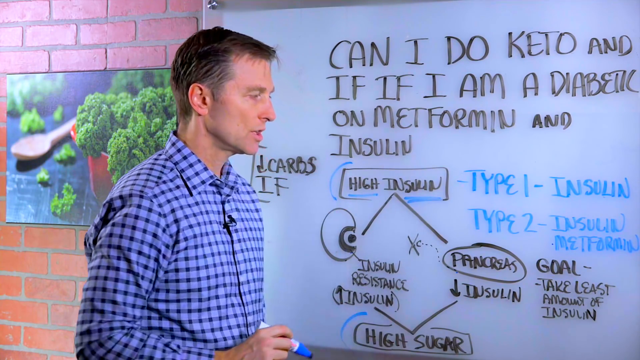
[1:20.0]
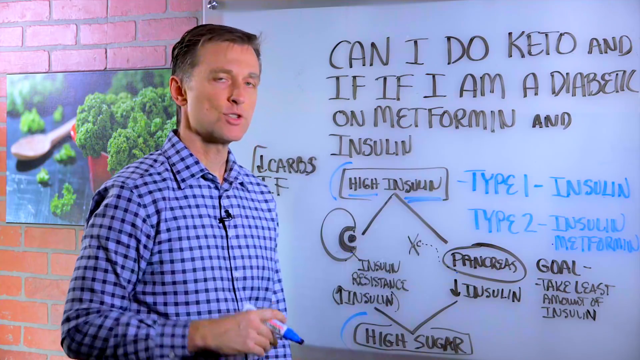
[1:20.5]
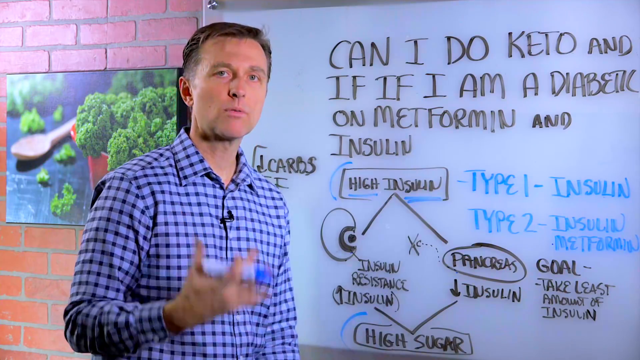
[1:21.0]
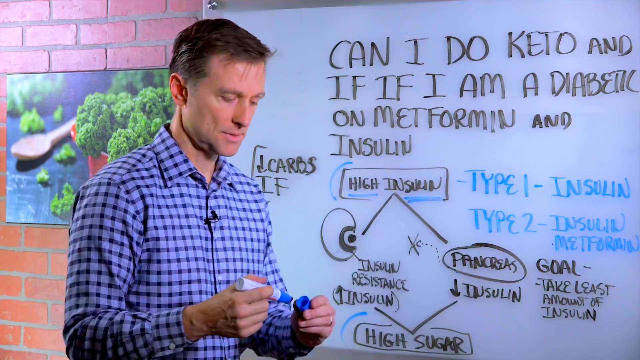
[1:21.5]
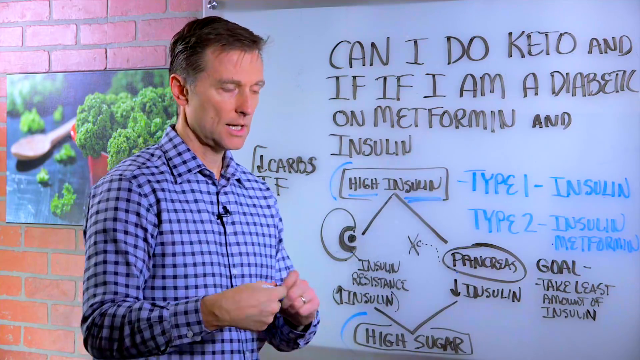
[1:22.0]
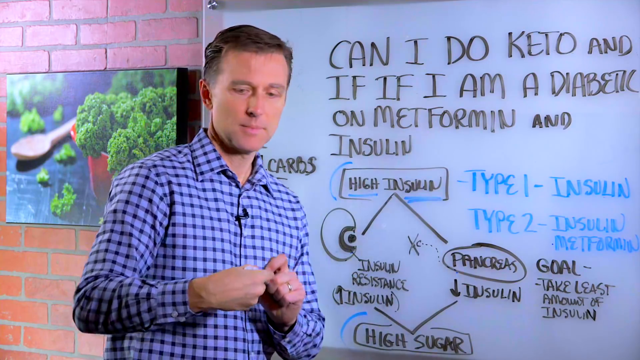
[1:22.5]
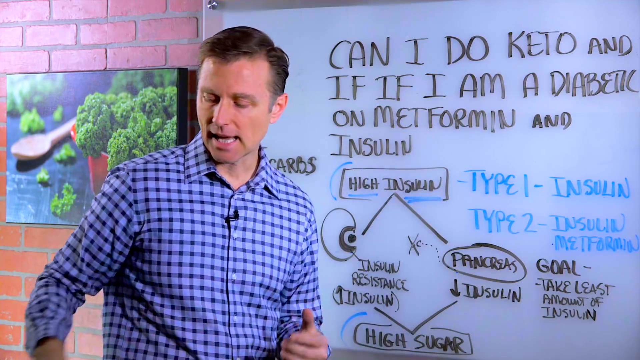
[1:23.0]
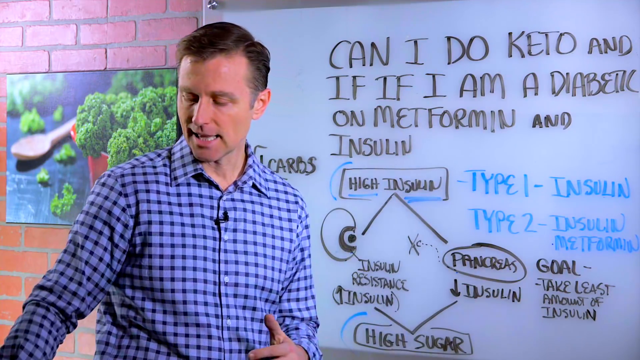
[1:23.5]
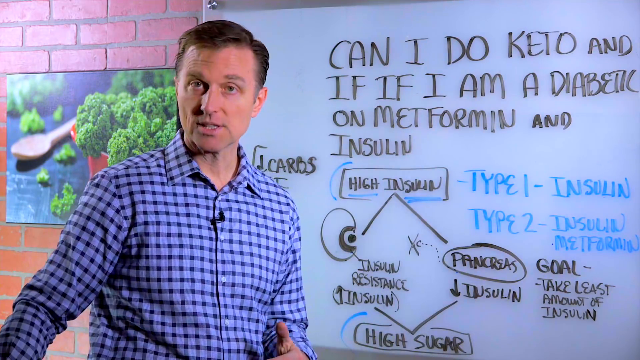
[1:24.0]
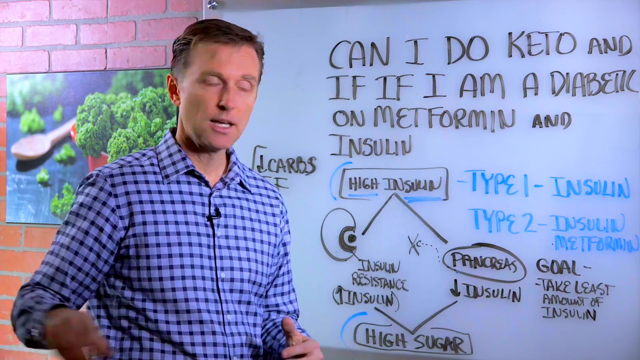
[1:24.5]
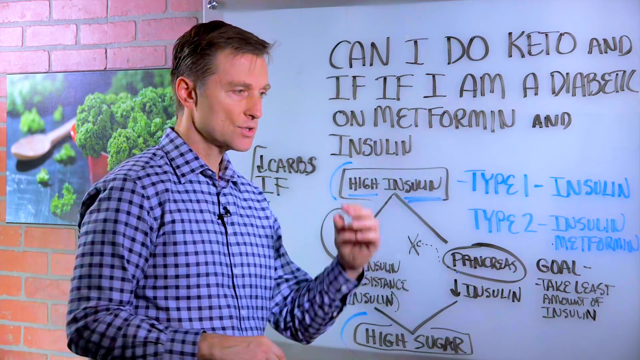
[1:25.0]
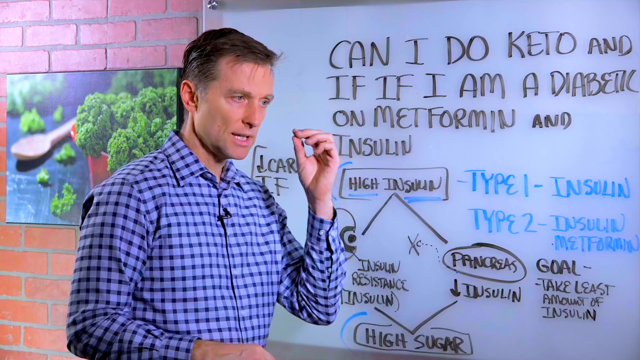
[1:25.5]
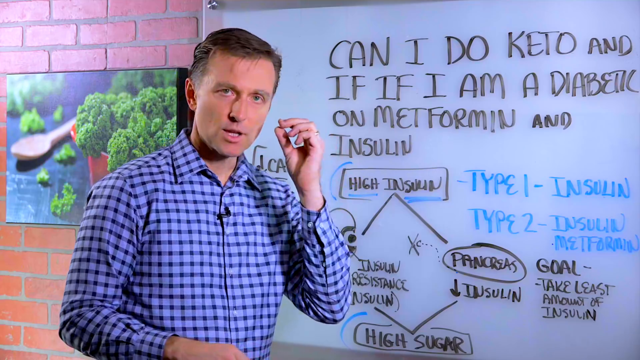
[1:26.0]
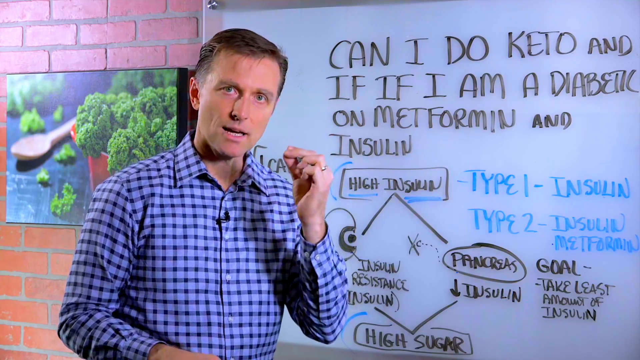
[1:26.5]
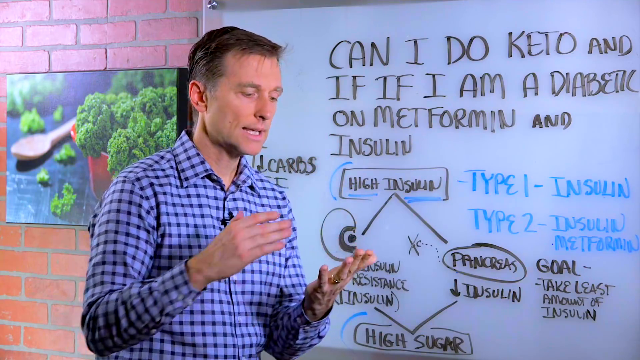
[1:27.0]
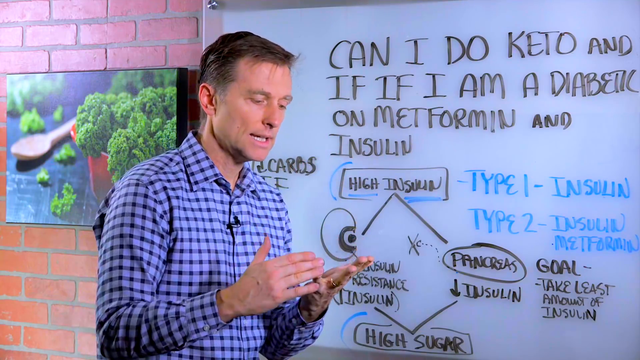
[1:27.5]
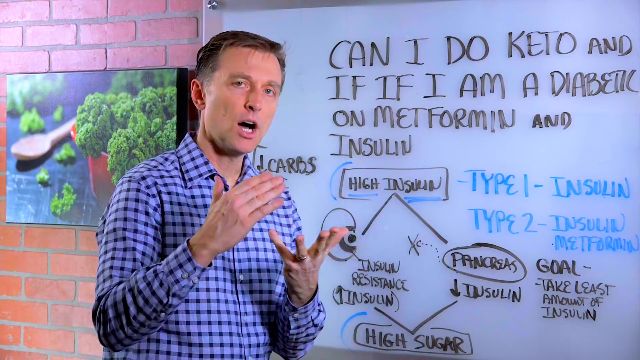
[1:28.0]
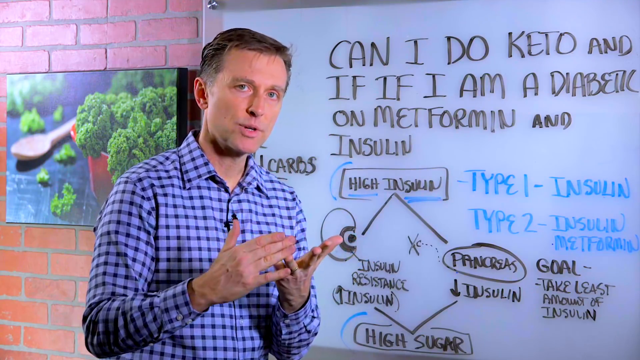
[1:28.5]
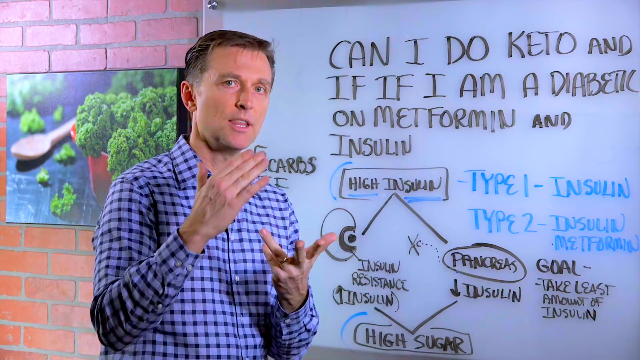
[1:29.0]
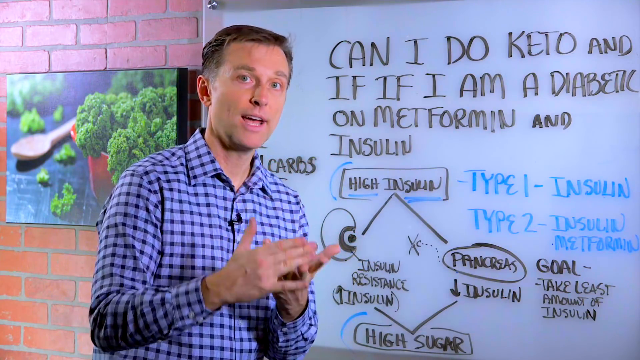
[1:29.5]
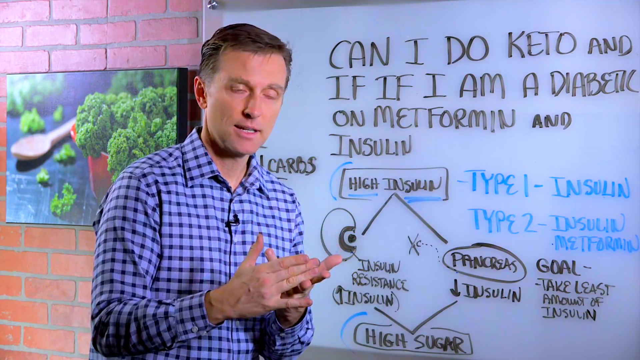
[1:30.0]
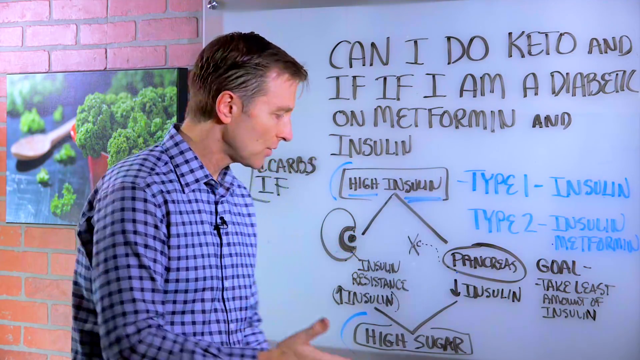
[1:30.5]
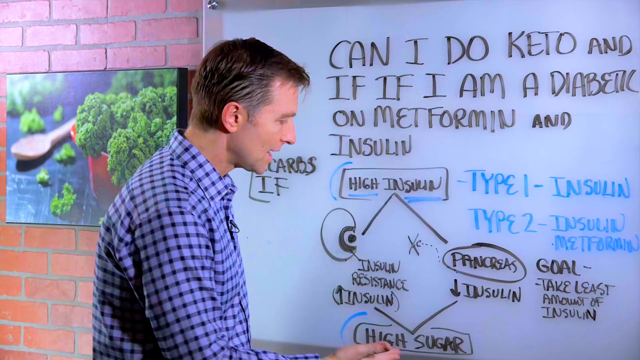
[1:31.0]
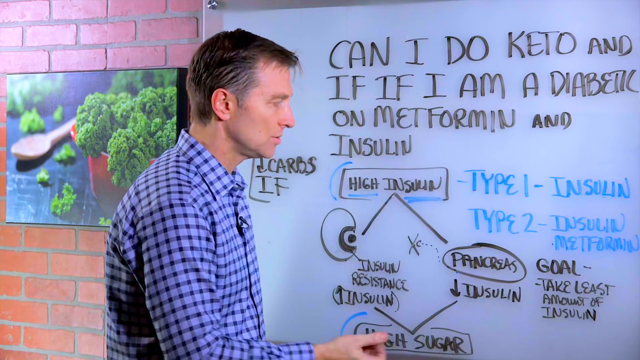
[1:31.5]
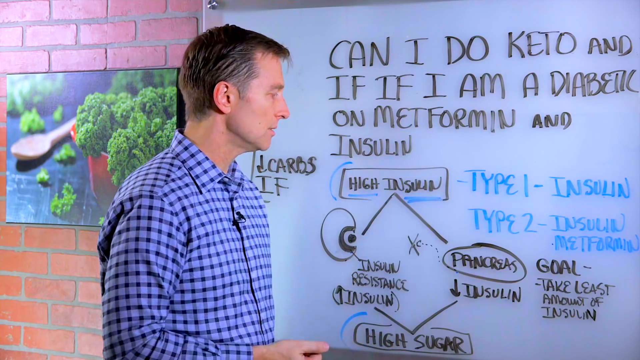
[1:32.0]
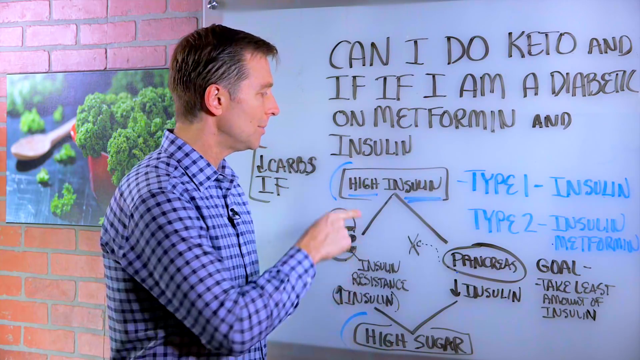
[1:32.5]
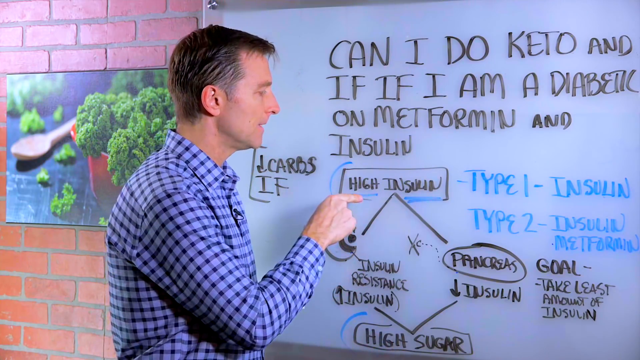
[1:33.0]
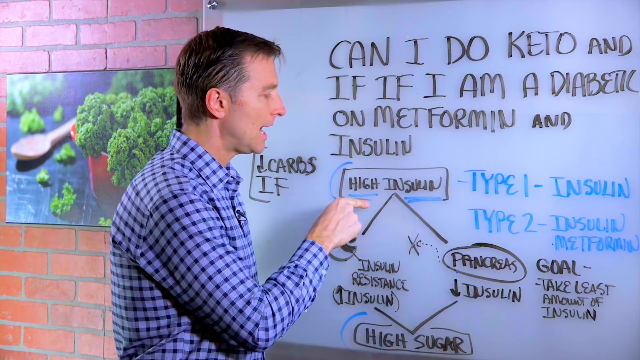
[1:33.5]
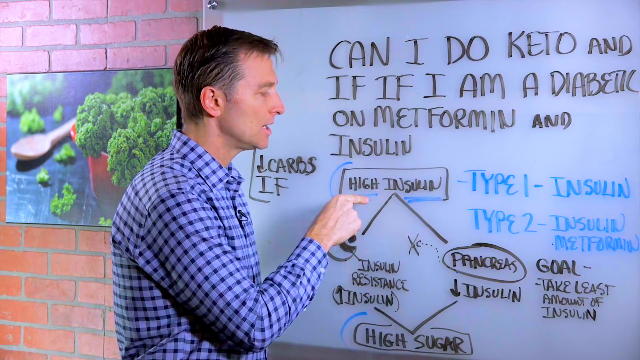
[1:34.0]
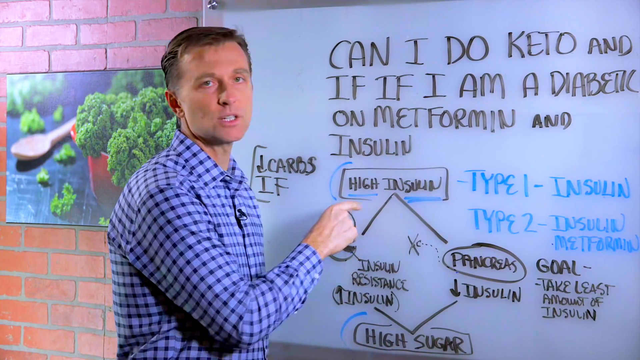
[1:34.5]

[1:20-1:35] The man puts the cap on the blue marker and talks directly to the camera. He puts one hand over the other as if pounding down on it, then counts off on his fingers from his pinky to his ring finger to his middle finger, as if listing different reasons. He goes back to the whiteboard and points to where he underlined high insulin, and also points to high sugar.